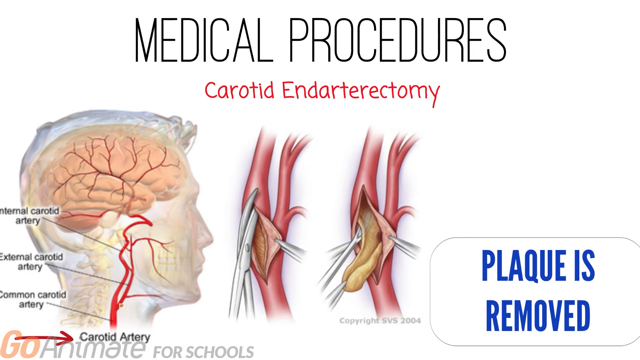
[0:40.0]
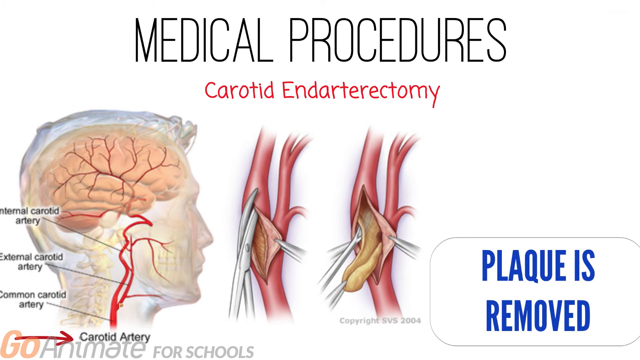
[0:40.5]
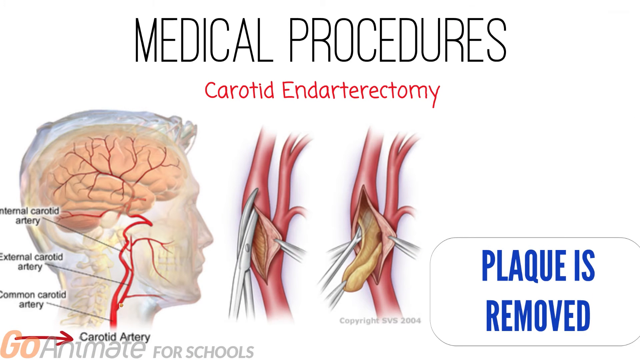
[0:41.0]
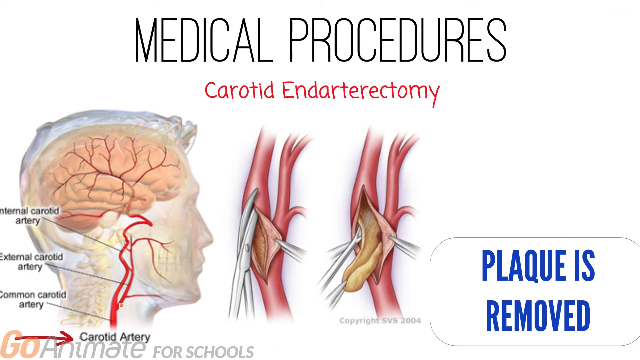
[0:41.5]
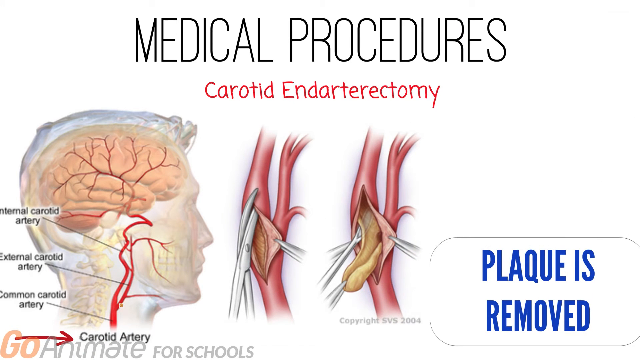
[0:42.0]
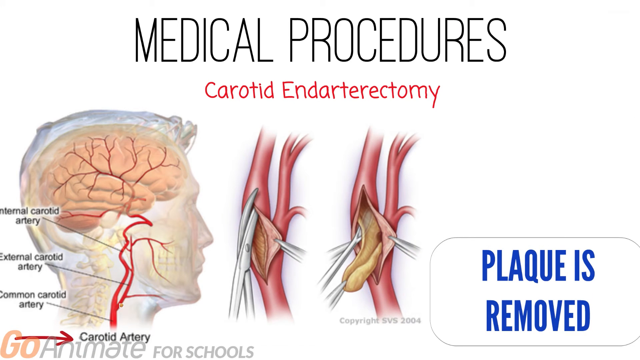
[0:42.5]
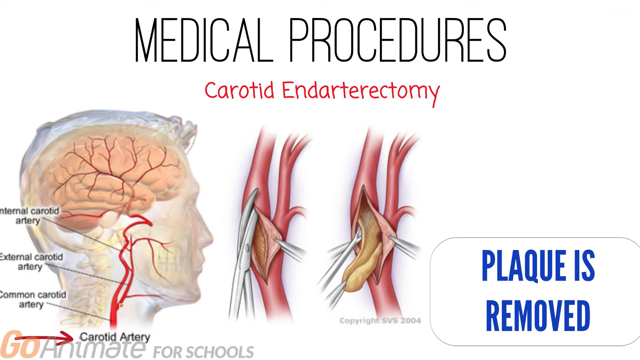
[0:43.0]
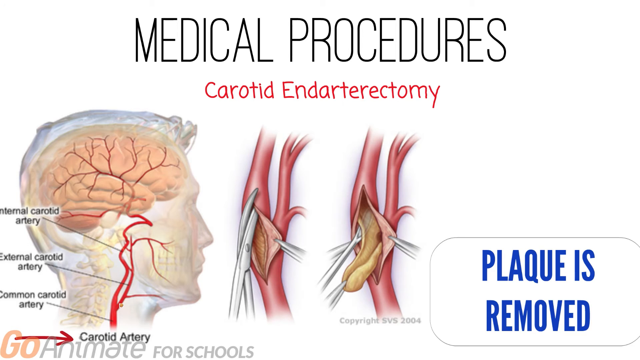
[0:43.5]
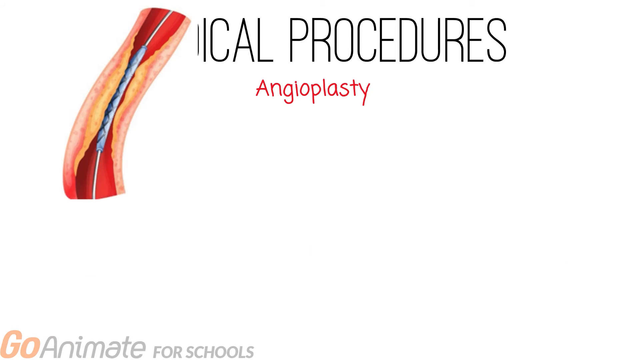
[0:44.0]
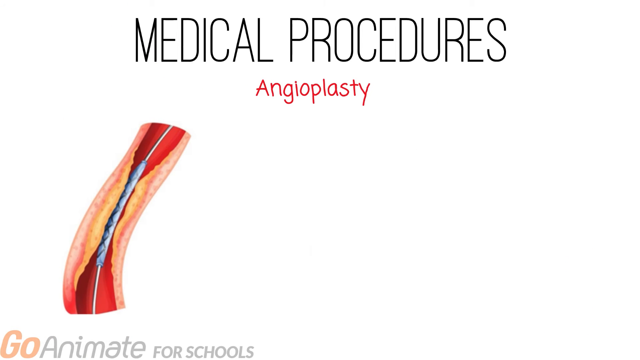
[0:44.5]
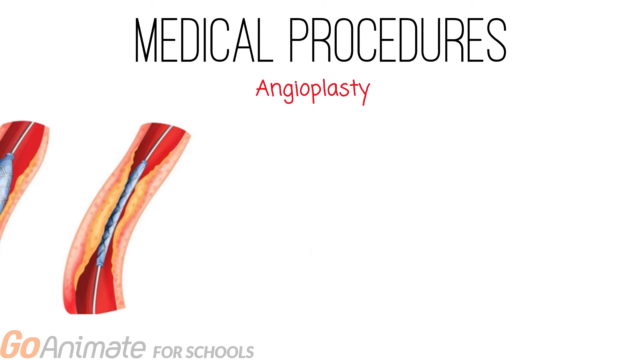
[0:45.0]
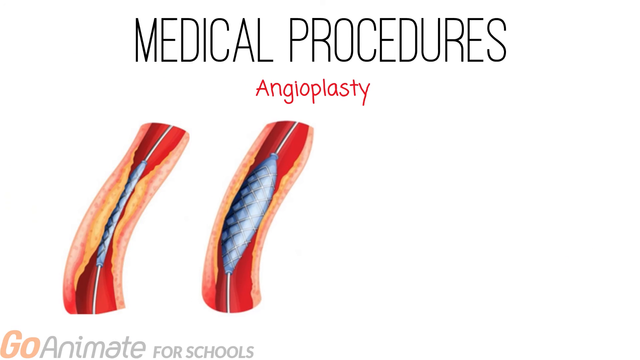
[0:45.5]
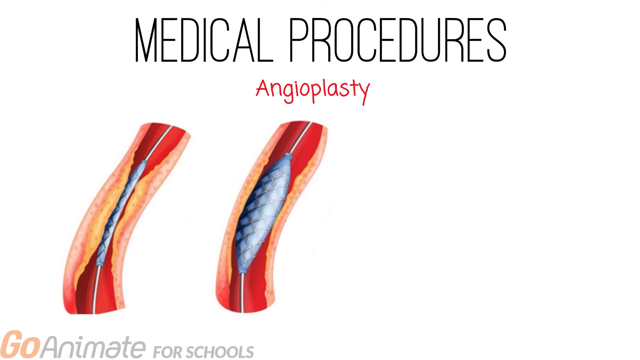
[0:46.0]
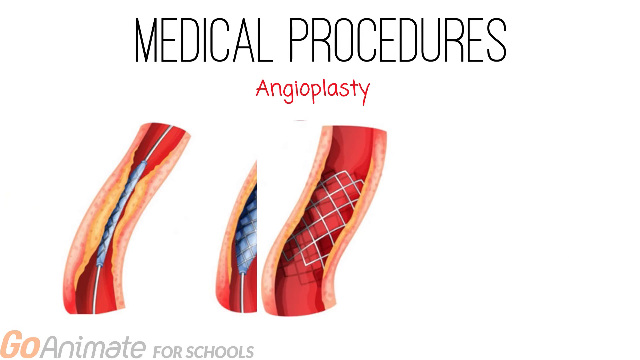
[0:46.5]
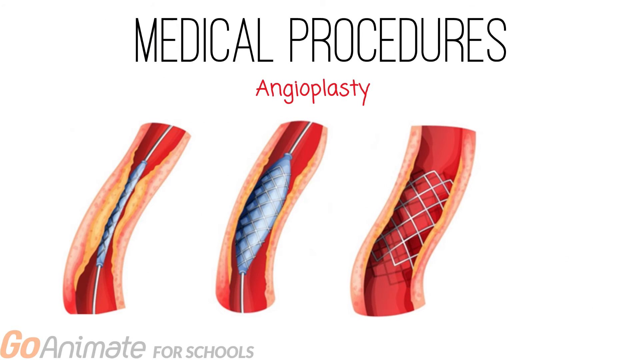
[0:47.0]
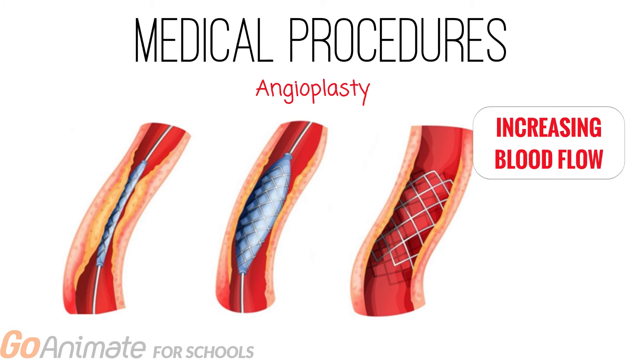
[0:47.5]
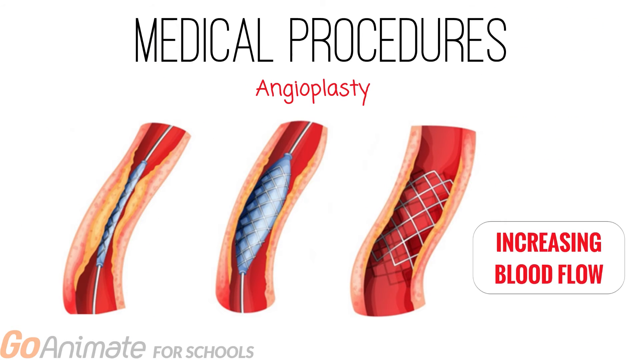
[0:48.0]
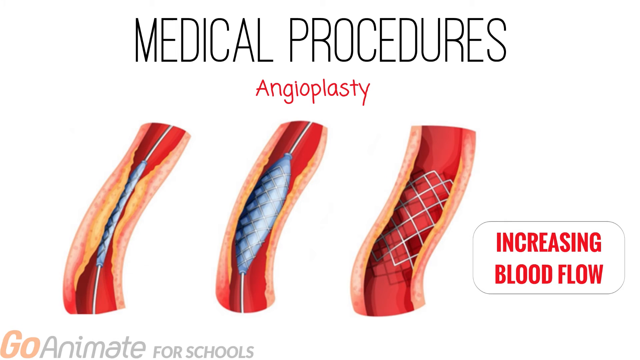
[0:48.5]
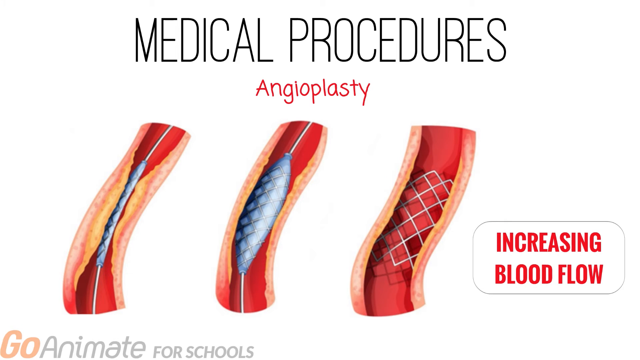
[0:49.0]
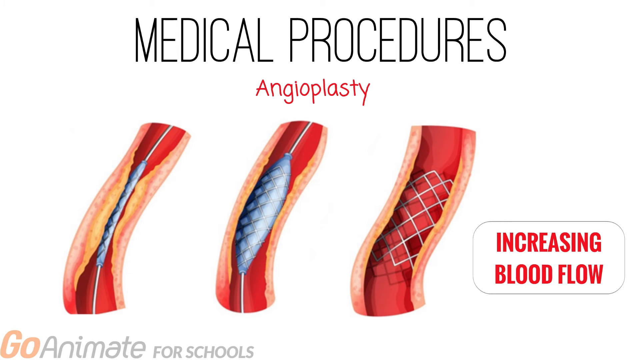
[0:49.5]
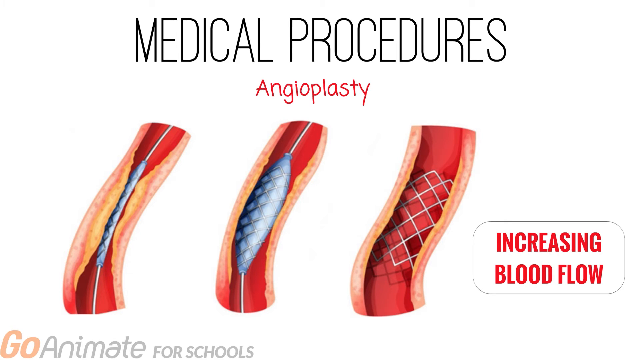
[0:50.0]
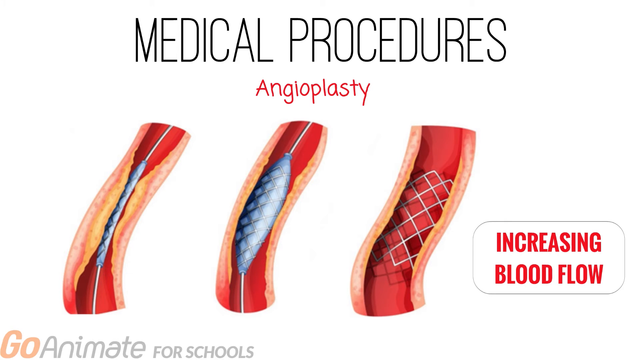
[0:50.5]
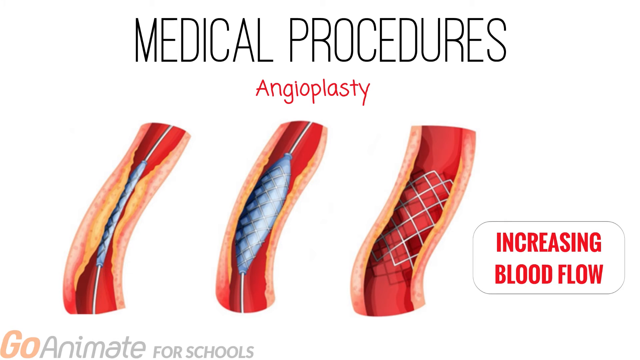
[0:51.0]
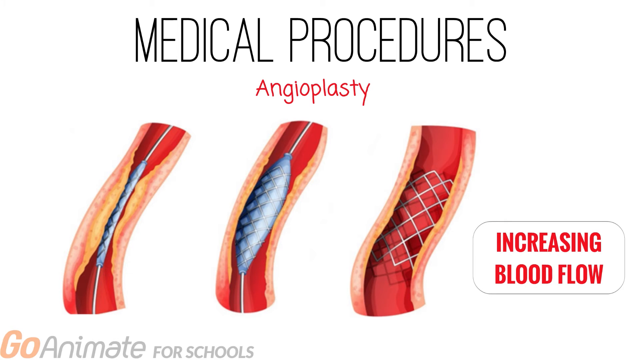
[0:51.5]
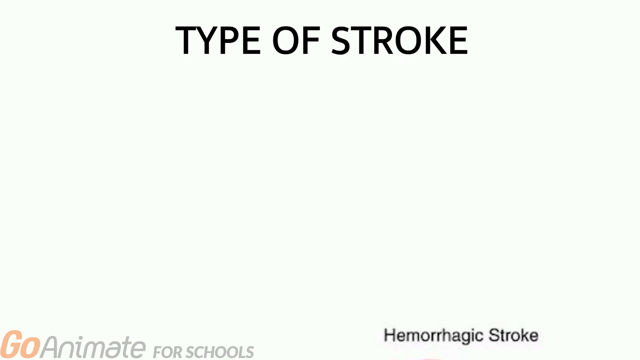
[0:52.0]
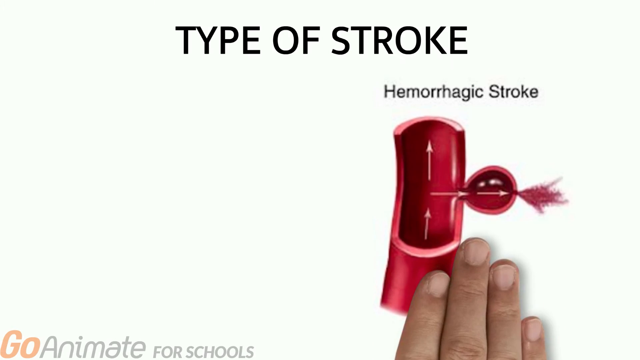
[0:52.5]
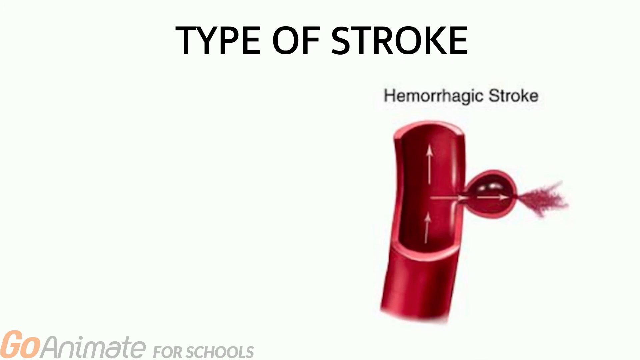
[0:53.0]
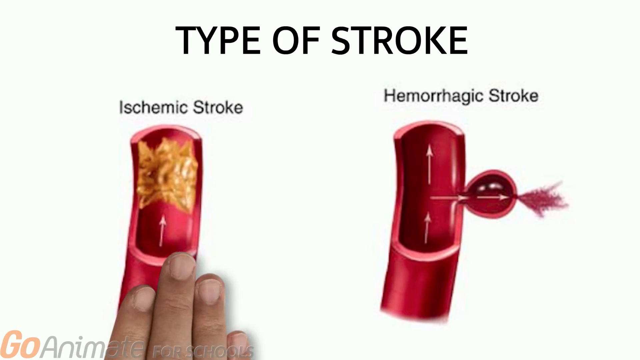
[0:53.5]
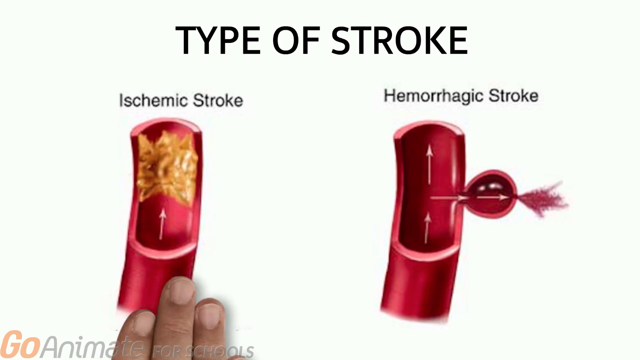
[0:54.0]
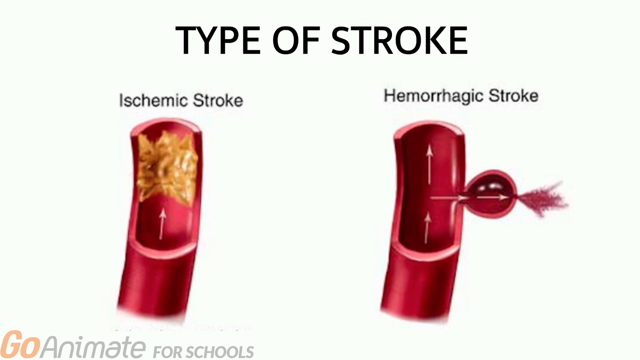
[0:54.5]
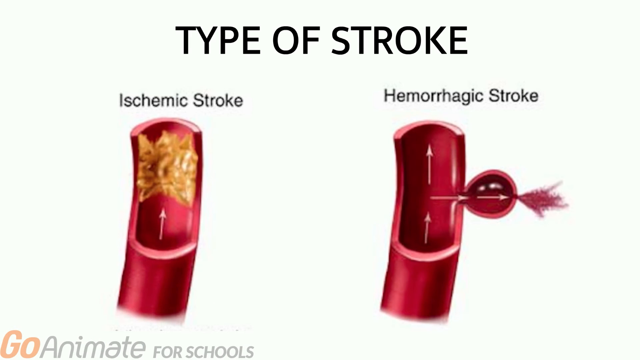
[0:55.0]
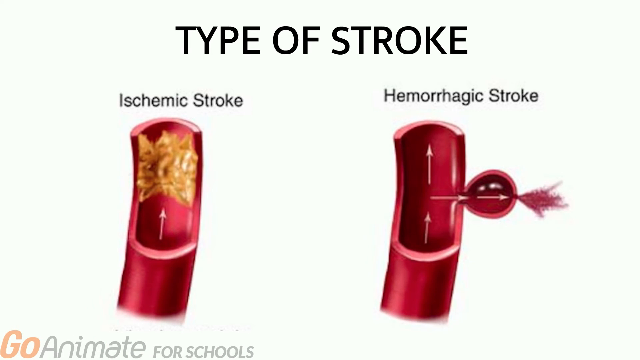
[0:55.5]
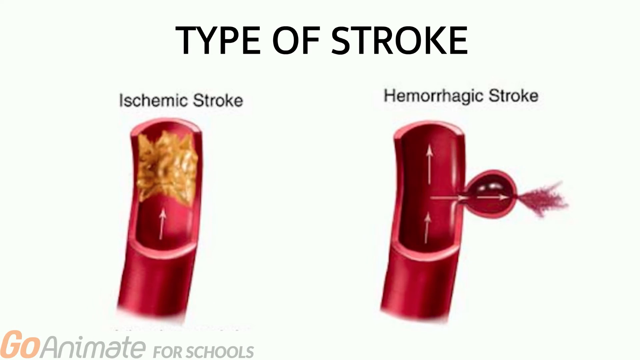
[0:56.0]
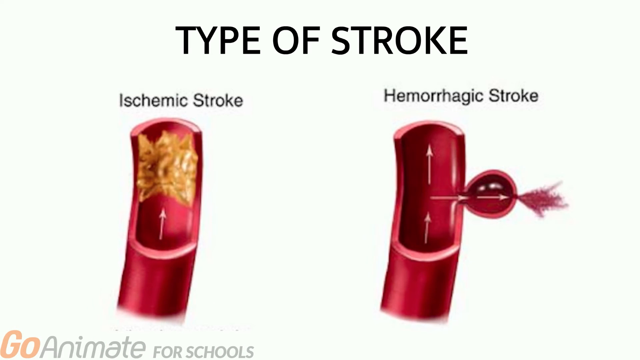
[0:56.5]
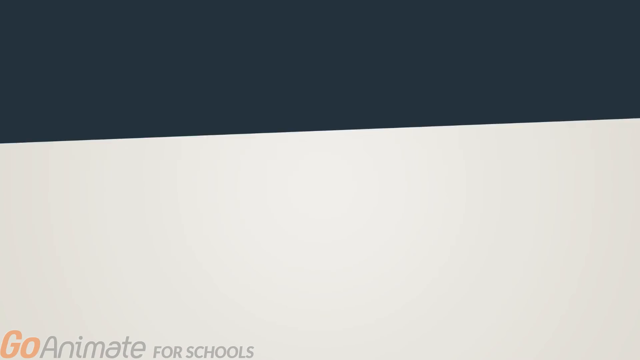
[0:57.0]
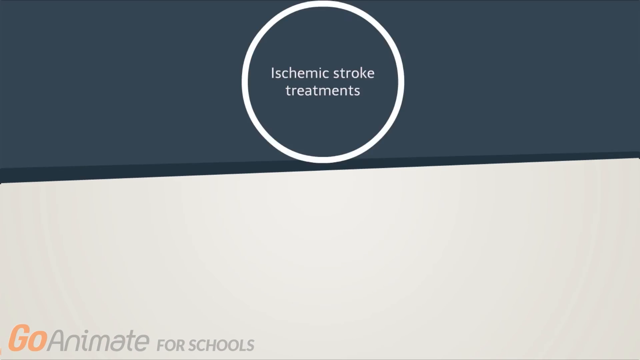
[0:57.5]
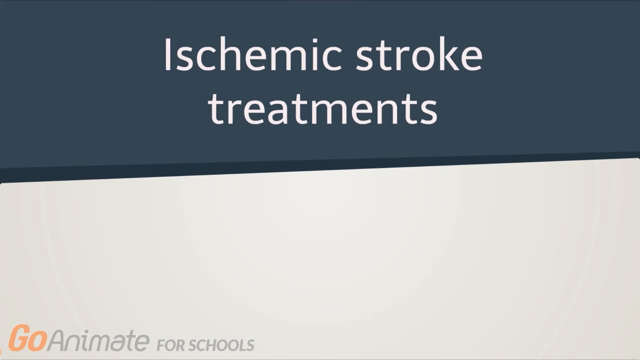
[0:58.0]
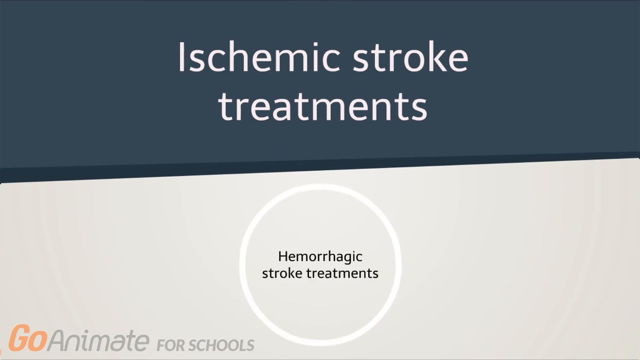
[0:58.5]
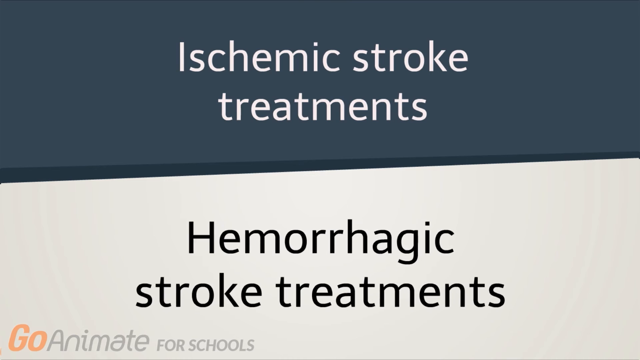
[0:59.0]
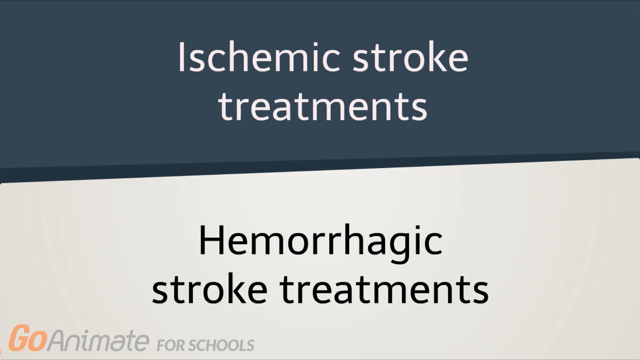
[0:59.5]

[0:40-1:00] The shape of a human head is on the left center and bottom of the screen, showing the brain, with the external carotid artery and the internal carotid artery within the anatomical picture. The view moves to the center of the screen, which says "carotid endarterectomy" and shows two medical diagrams of both arteries, with "plaque is removed" in blue in the bottom right corner. Next, "medical procedures" appears in large black text, with "angioplasty" in smaller red text under it. Two anatomical pictures in the bottom left corner show veins with gray objects in the center: in the far left one the gray object is thin, and in the right one, almost in the center of the screen, the gray object is thicker. Another artery moves over to the right of the screen beside the other two; in it the silver pieces are gone and the blood flow is now working well. Red text in the bottom right corner says "increasing blood flow." The screen changes to "type of stroke" in black text in the center. On the left is "ischemic stroke" with a vein showing plaque inside it. On the right, text says "hemorrhagic stroke" next to a red vein whose right part has moved out of its original position; the vein is no longer a tube and has an inflation on its right side.